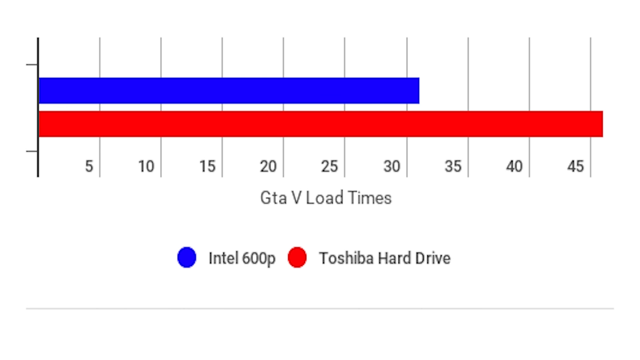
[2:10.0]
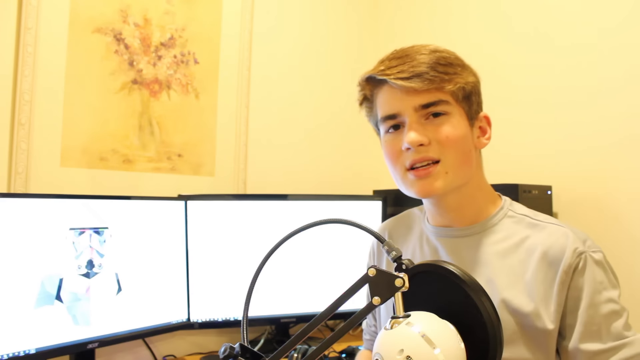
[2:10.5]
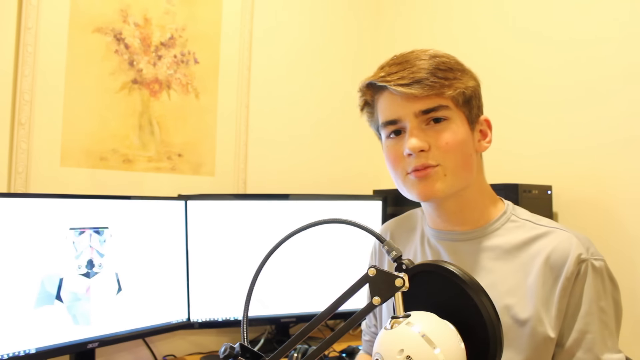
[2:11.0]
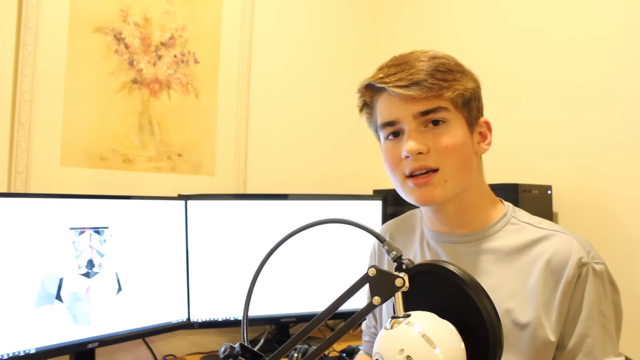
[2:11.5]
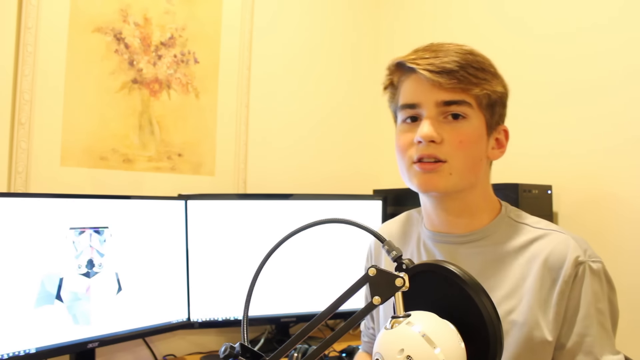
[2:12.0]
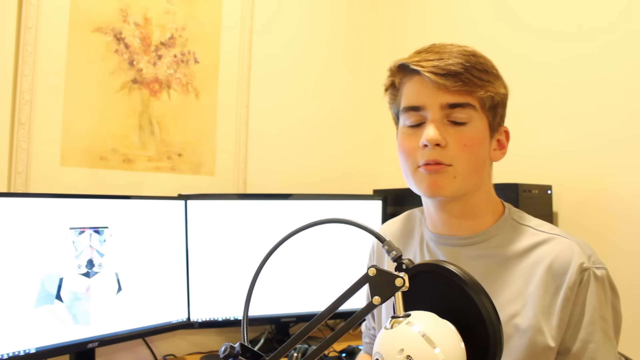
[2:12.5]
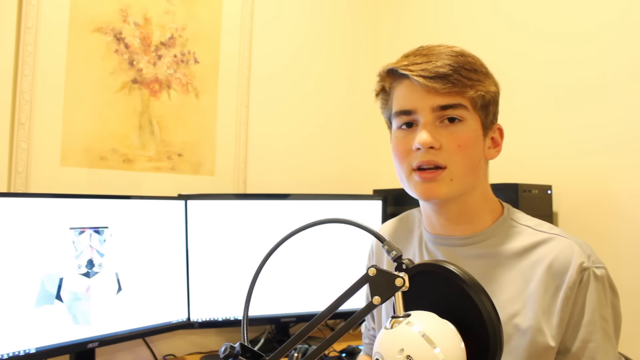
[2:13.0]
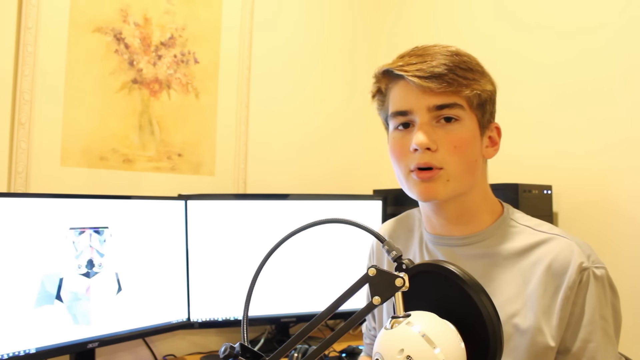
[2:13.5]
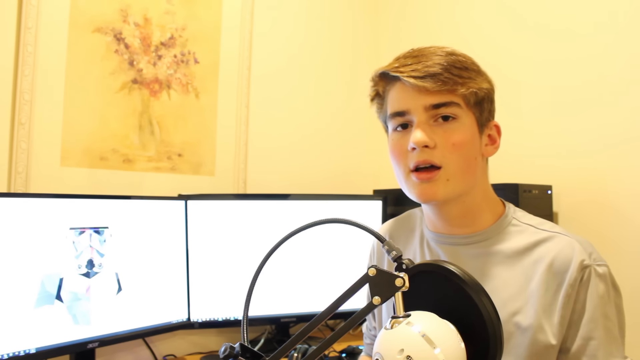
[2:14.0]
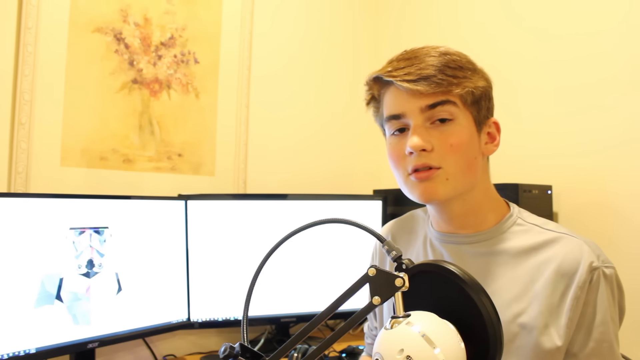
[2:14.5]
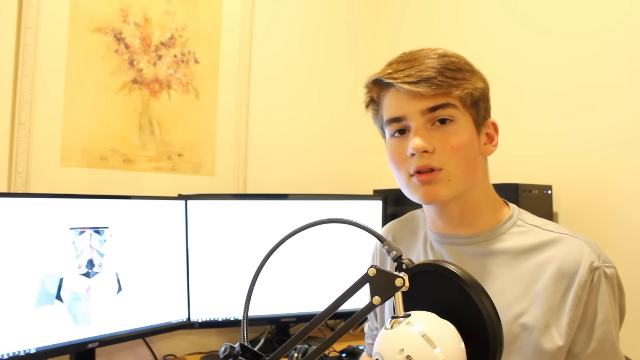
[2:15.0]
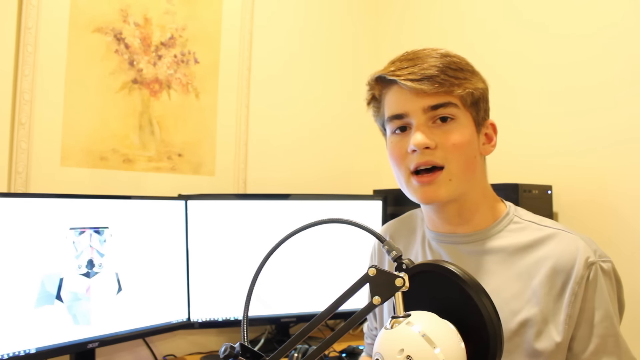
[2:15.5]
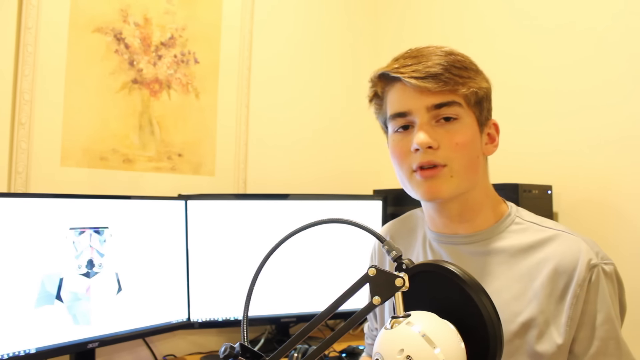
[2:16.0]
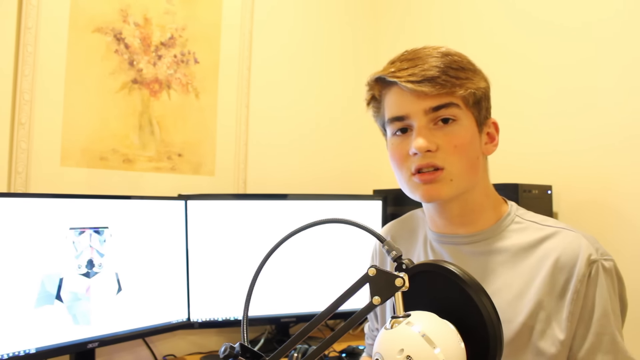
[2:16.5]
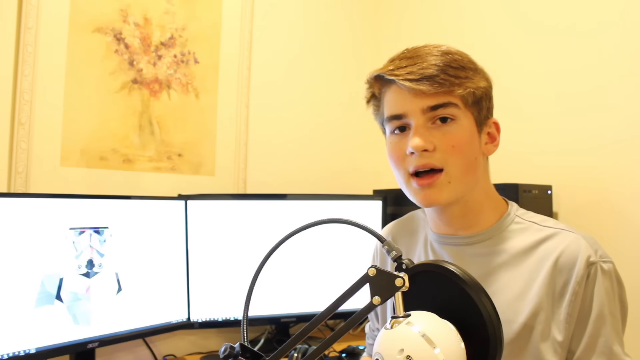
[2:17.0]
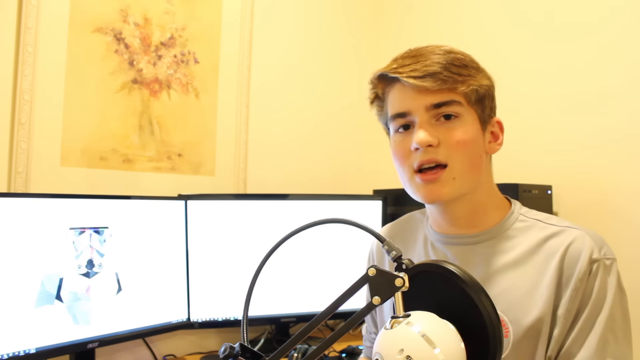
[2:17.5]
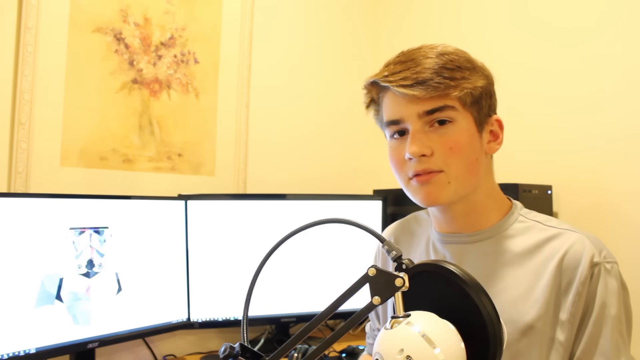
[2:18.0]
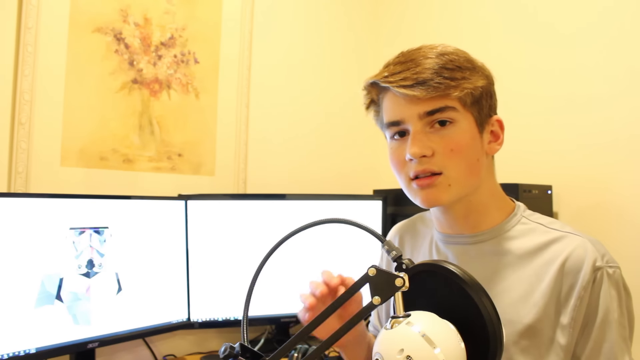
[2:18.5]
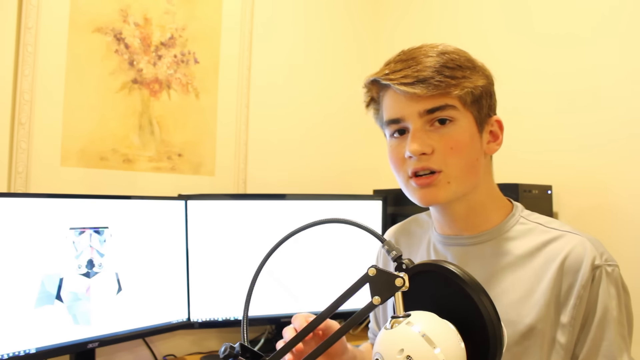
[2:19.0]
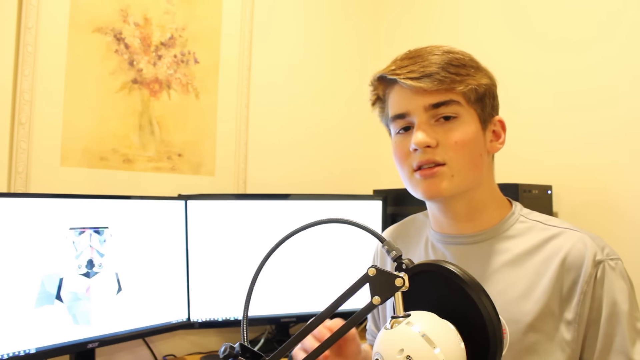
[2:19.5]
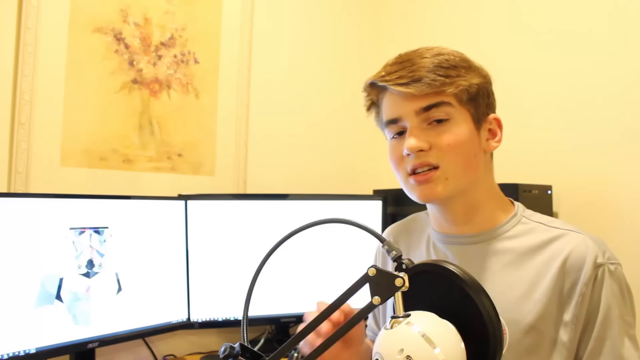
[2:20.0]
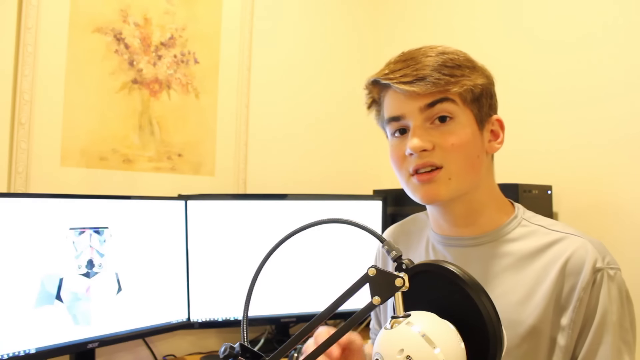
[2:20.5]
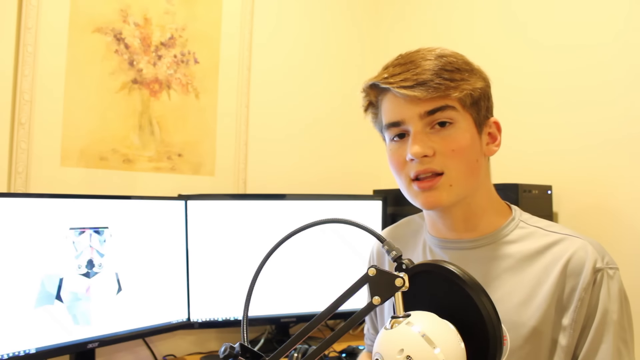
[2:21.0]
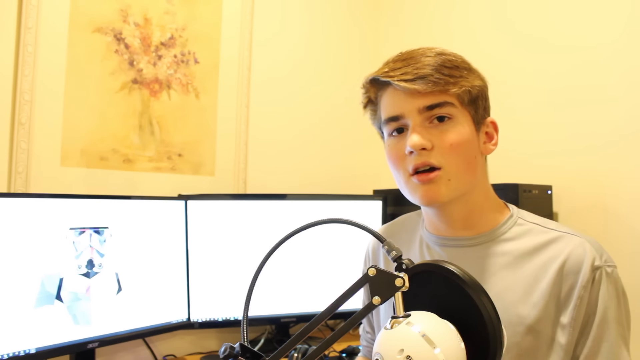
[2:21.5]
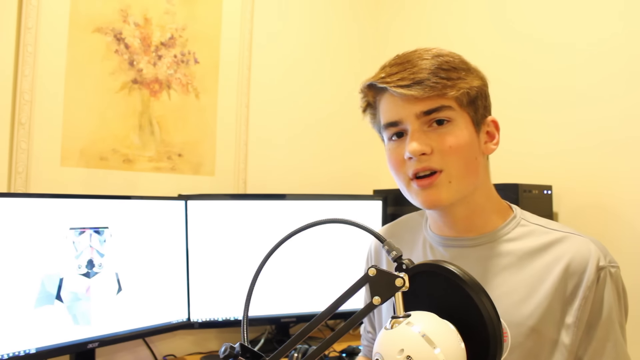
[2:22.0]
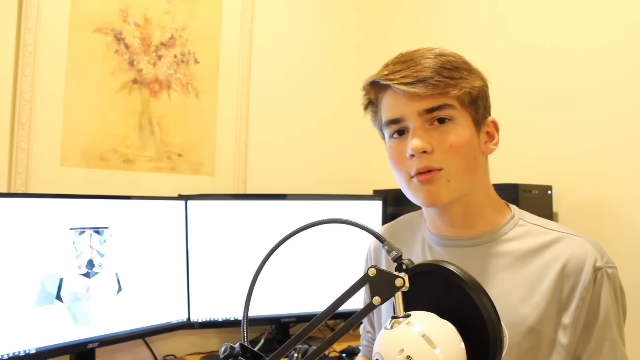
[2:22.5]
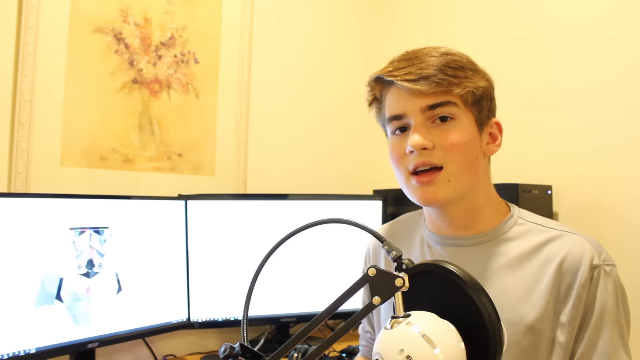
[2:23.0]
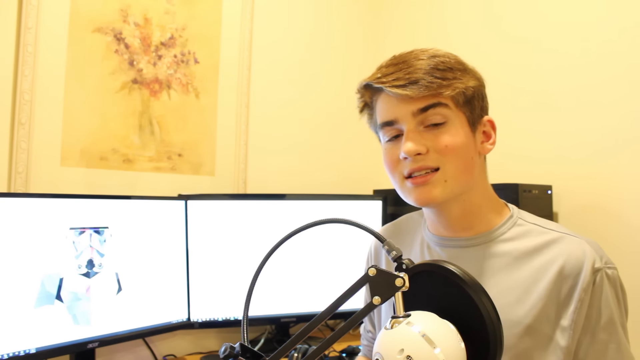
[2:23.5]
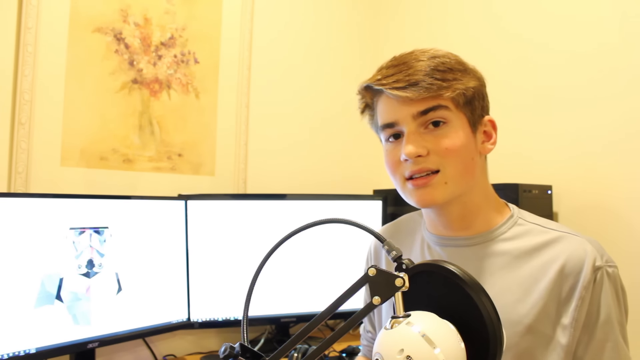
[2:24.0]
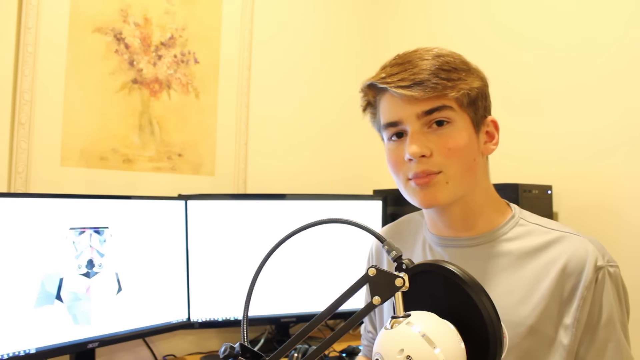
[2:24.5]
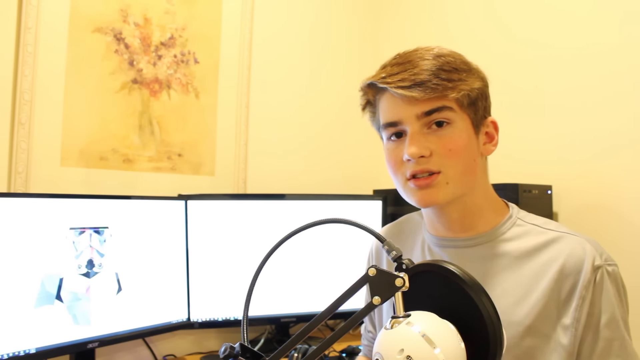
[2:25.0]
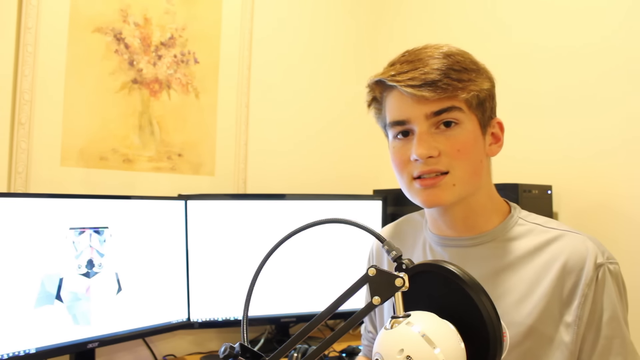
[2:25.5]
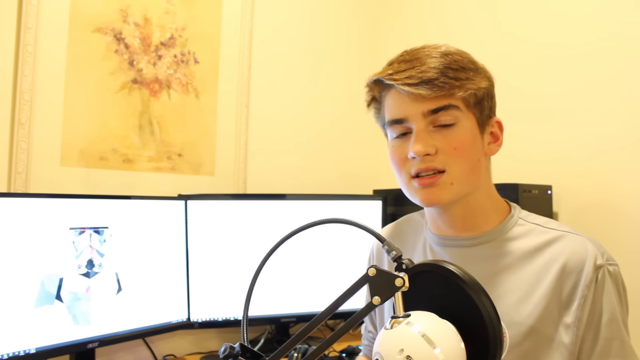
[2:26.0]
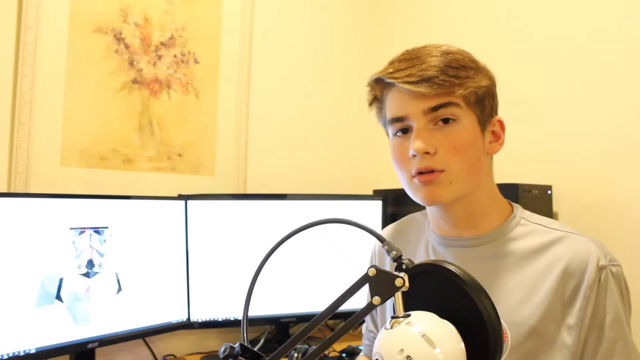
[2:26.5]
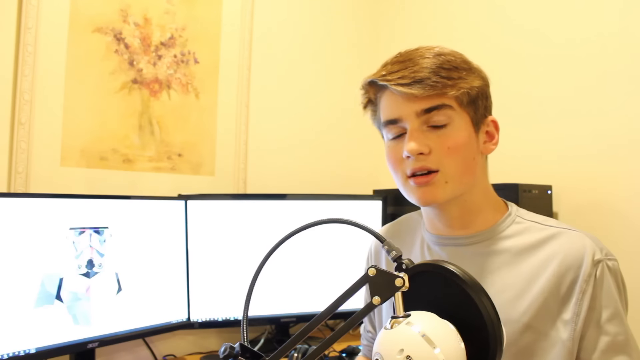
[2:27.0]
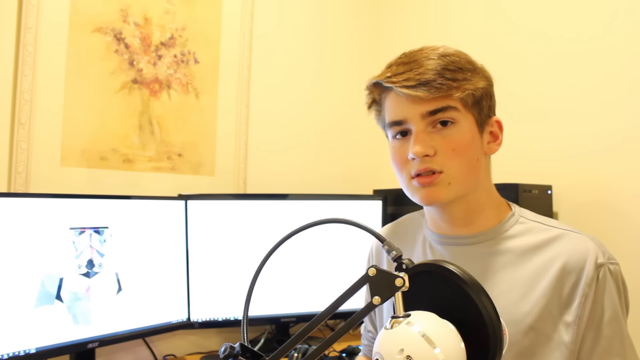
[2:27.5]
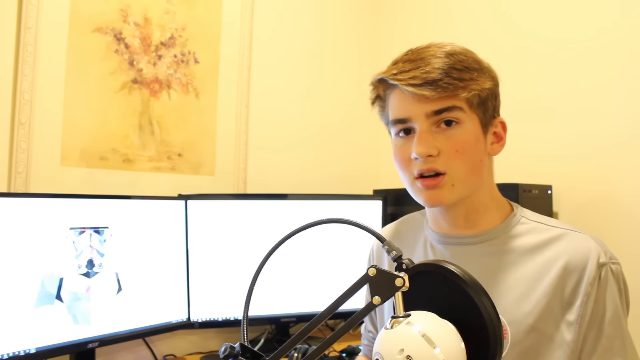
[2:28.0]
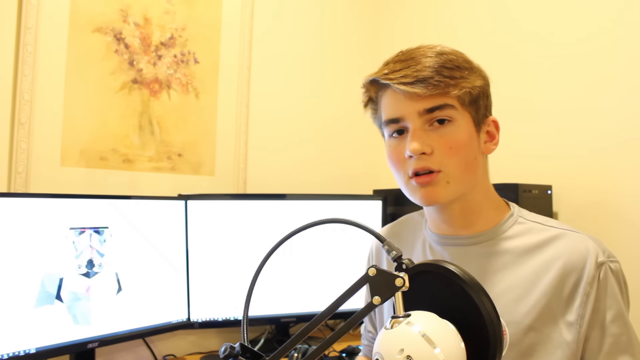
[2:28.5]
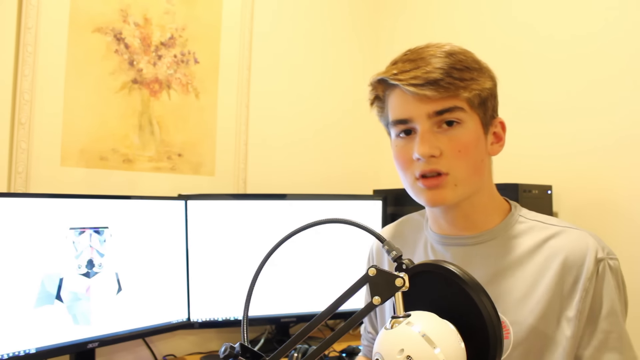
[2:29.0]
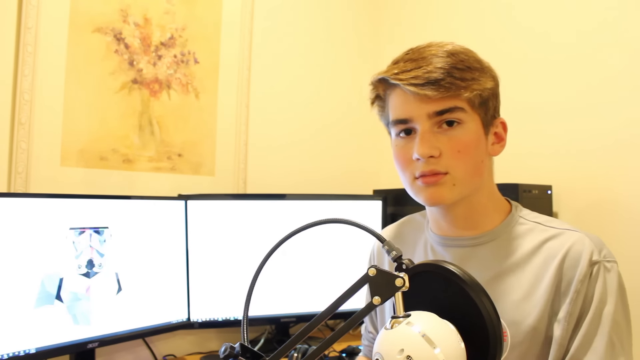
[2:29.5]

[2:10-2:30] A bar graph on a white background shows only two bars: the blue one at about 31 and the red one at about 46. Lines across the middle of the graph mark different numbers ranging from 5 to 45, and "GTA 5 load times" is written underneath. Next, a young white man, possibly a teenager or young adult, speaks while sitting on the right side of the screen in a room with pale yellow walls. On the left side, a painting of flowers and a vase is on the wall behind him. Behind him are two computer monitors, washed out by the light: one looks completely white, and the other appears to have some kind of unclear image on it. The monitors have black rims. He raises his left hand, kind of gestures as he speaks, and lowers it again. He looks directly at the camera while he talks, making eye contact throughout the video, with a fairly neutral expression, and does not move around much. In front of him is a large, black, round microphone with a black wire curving to the left, and there appears to be some kind of handle attached to its back. Behind him is some kind of black computer console, with what looks like a white light on its right side.